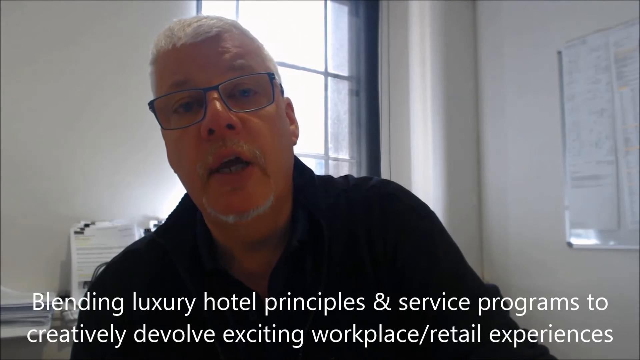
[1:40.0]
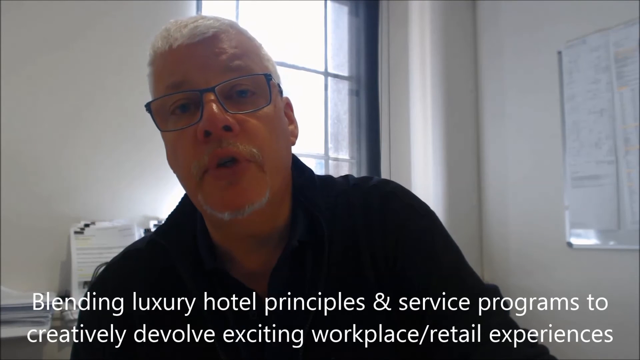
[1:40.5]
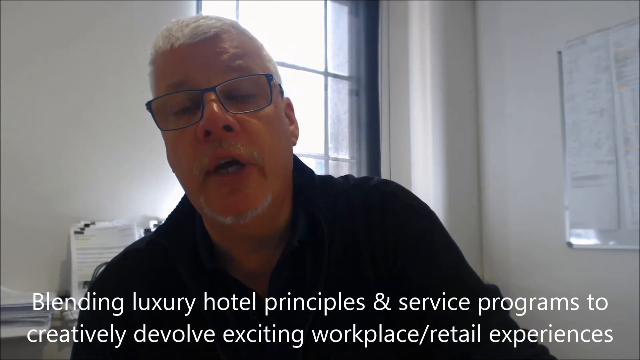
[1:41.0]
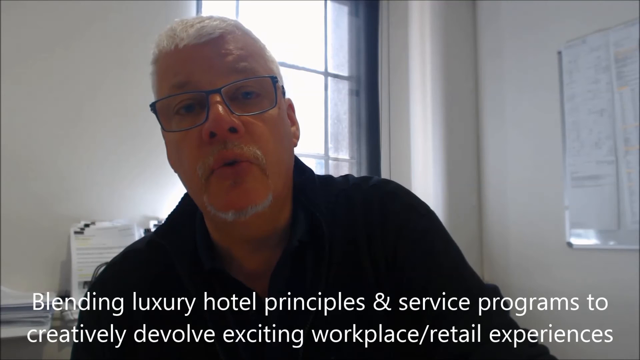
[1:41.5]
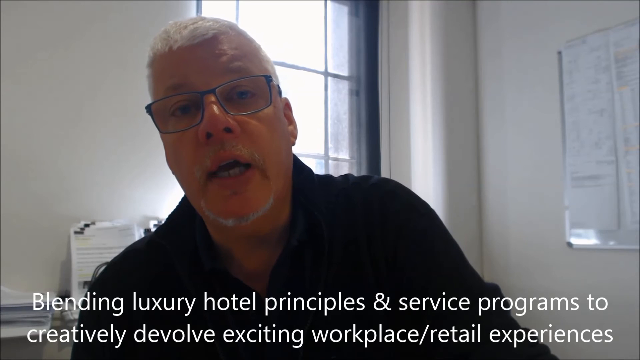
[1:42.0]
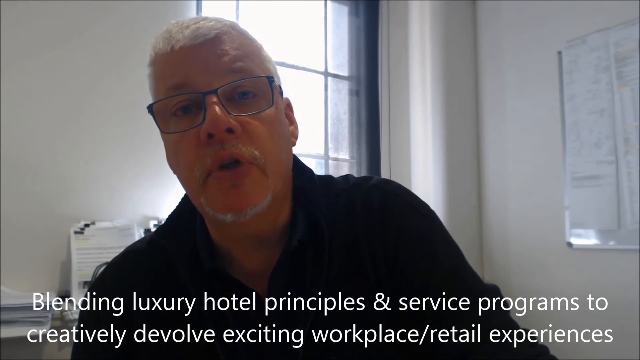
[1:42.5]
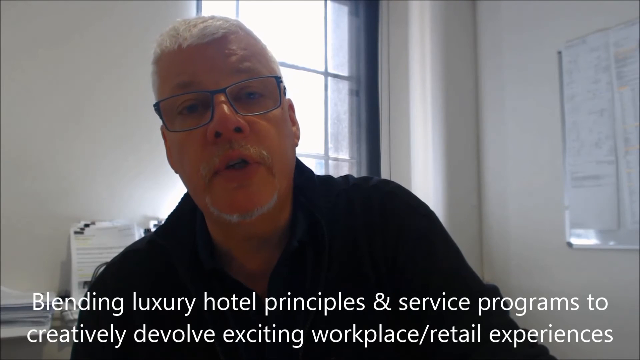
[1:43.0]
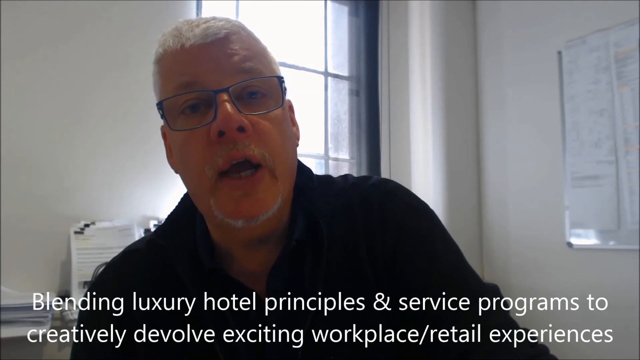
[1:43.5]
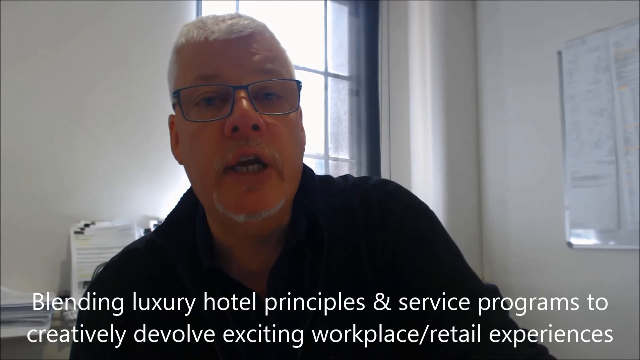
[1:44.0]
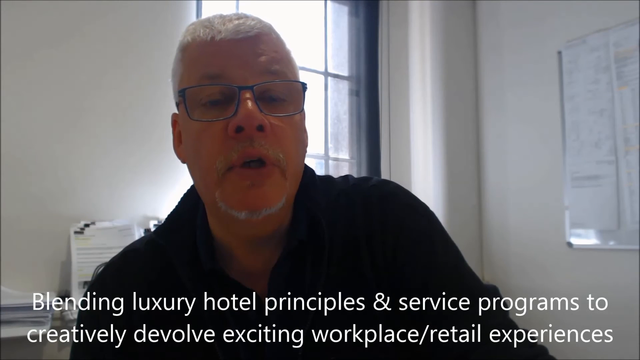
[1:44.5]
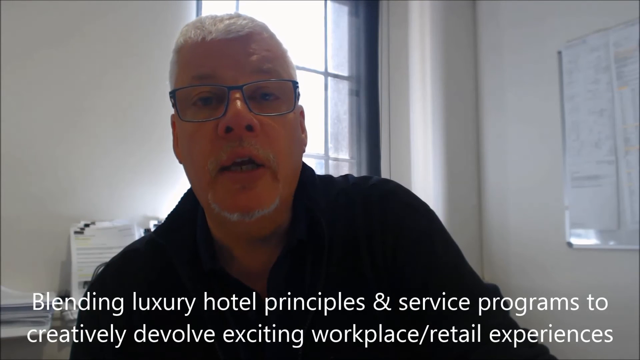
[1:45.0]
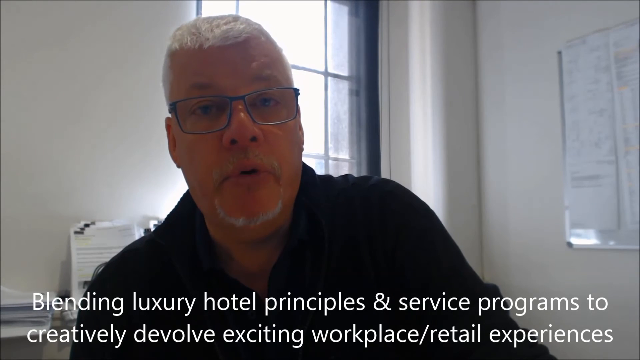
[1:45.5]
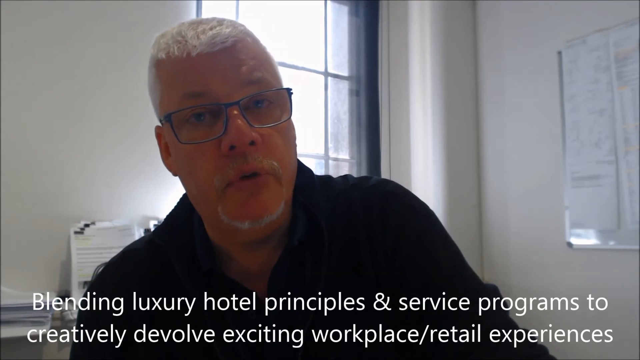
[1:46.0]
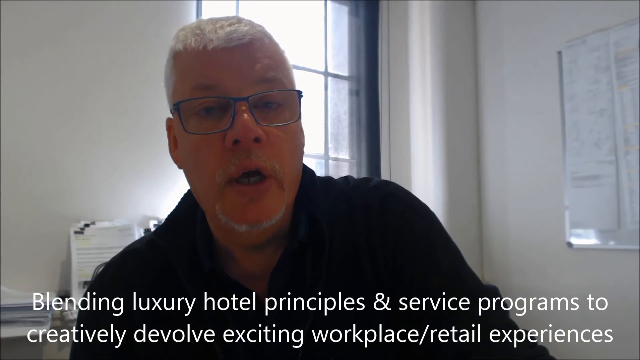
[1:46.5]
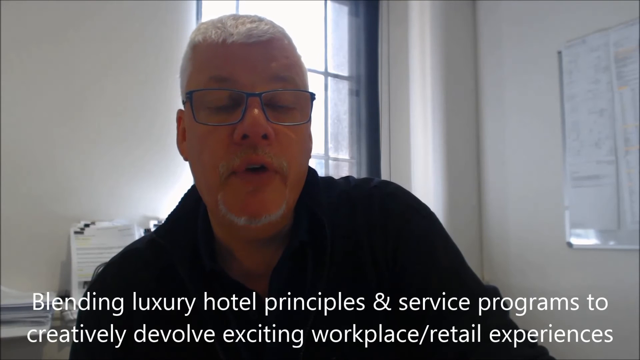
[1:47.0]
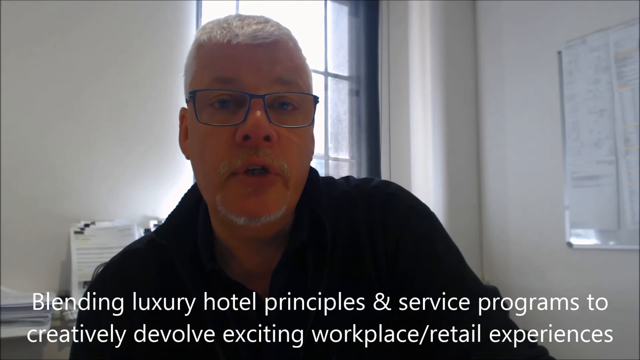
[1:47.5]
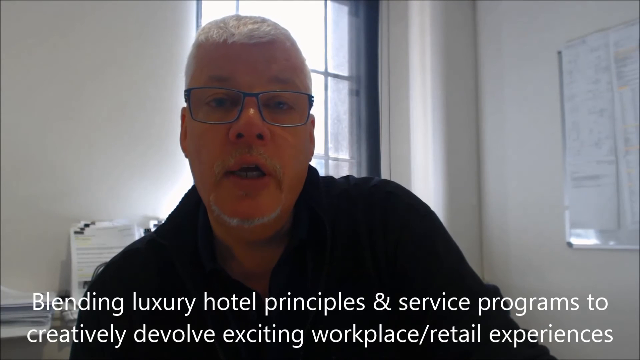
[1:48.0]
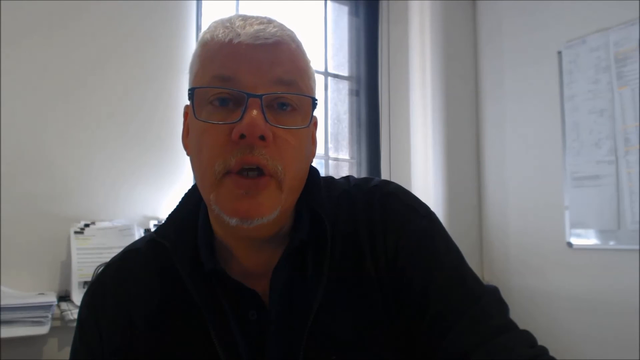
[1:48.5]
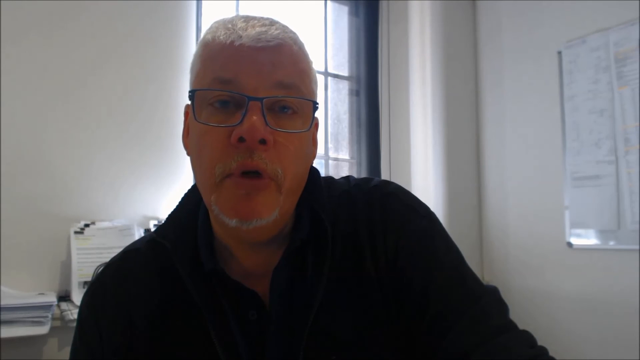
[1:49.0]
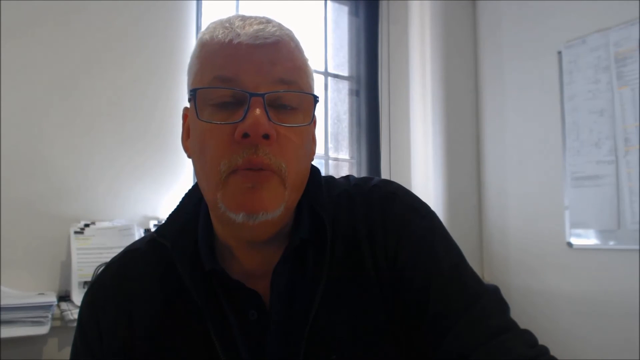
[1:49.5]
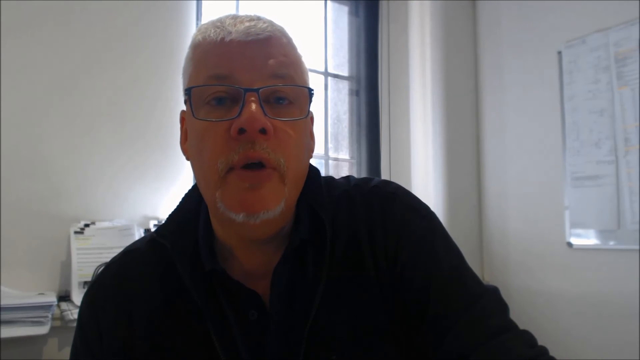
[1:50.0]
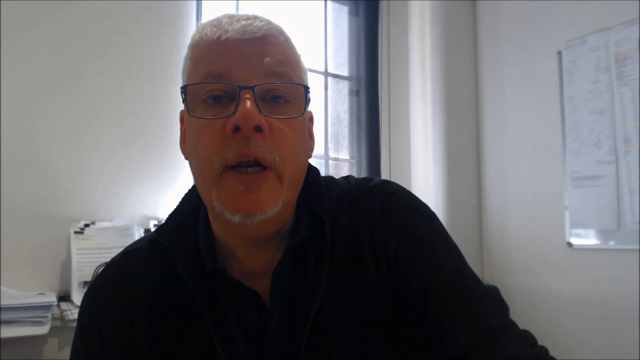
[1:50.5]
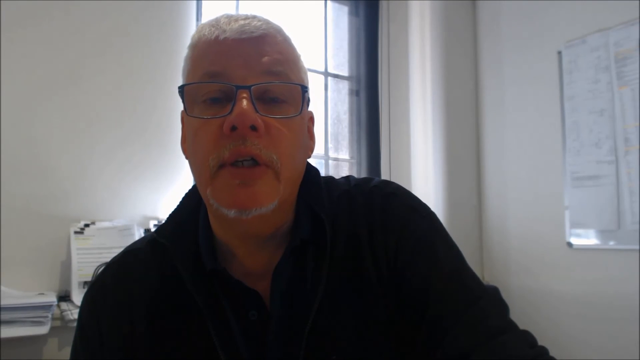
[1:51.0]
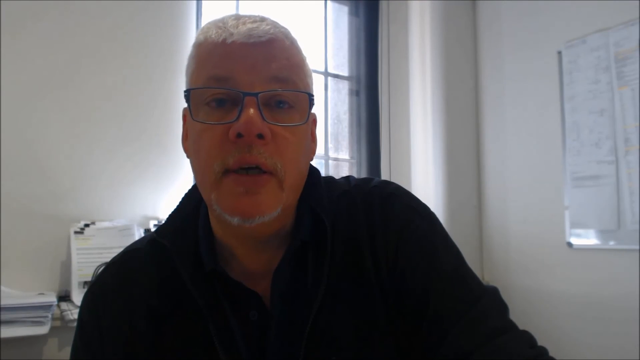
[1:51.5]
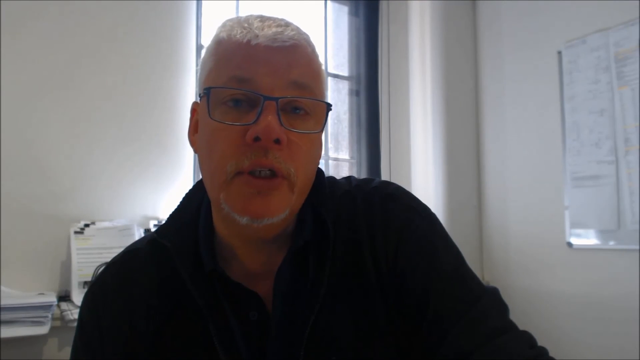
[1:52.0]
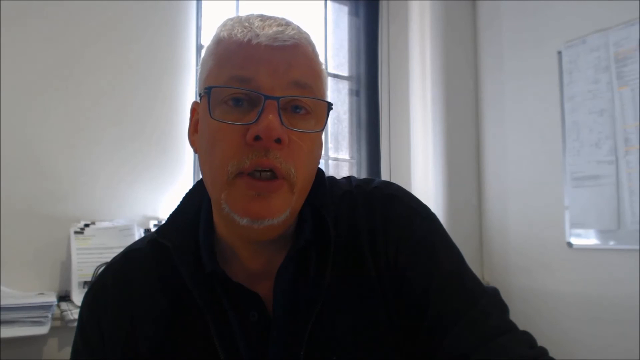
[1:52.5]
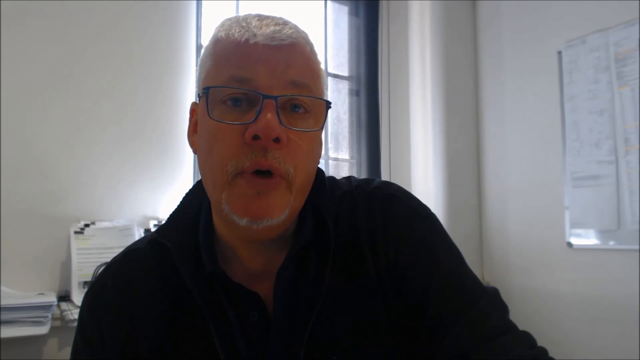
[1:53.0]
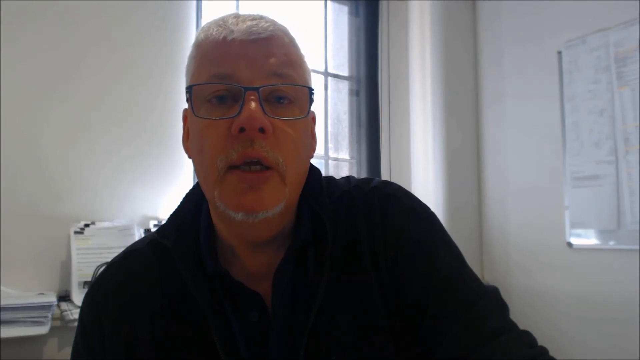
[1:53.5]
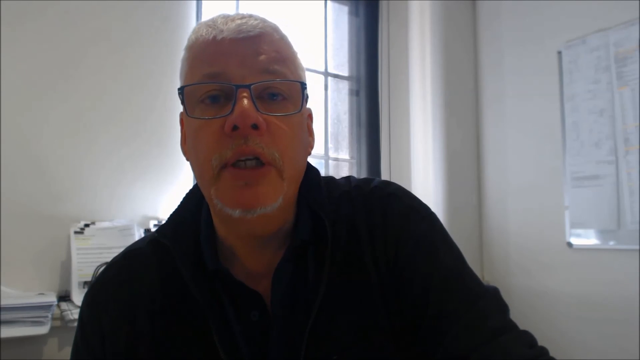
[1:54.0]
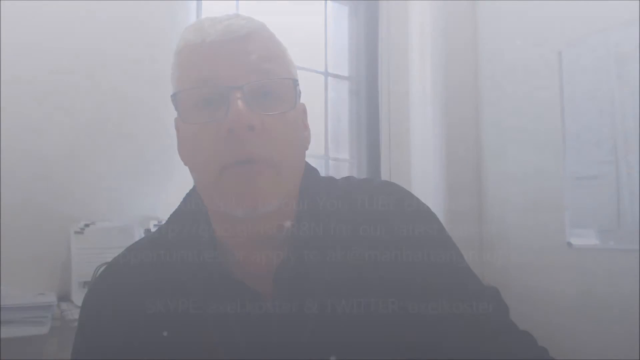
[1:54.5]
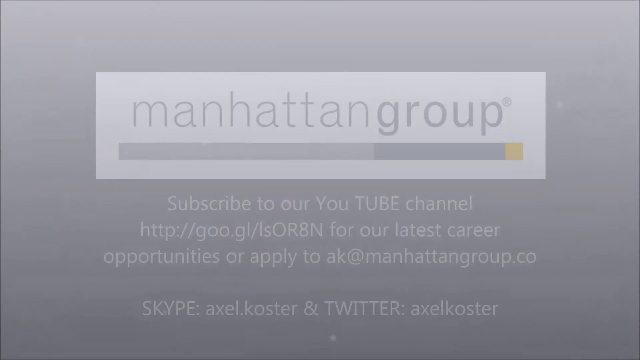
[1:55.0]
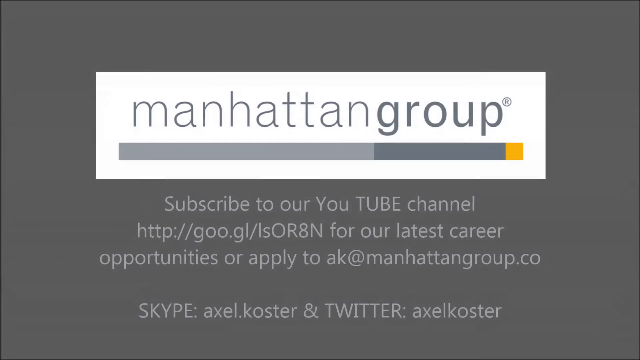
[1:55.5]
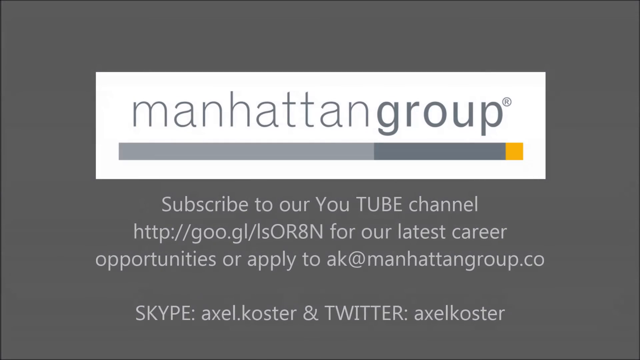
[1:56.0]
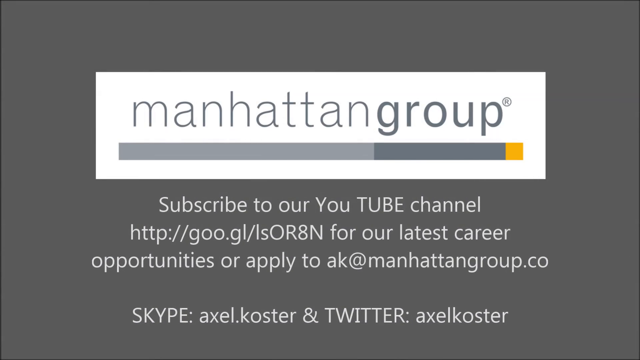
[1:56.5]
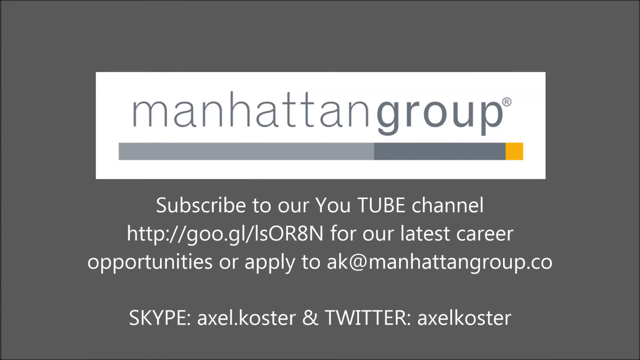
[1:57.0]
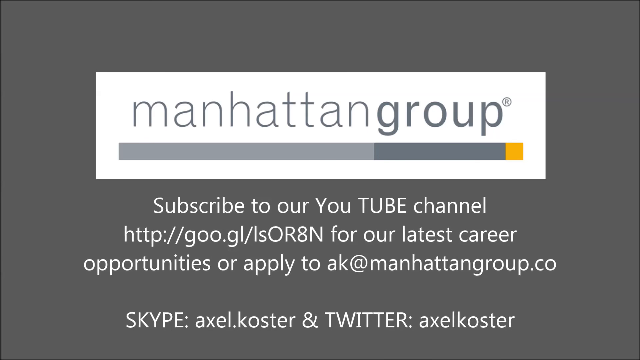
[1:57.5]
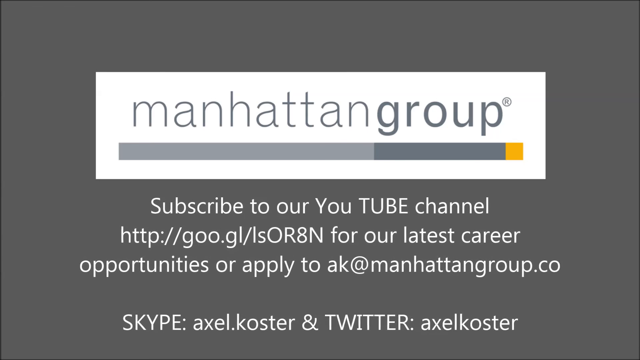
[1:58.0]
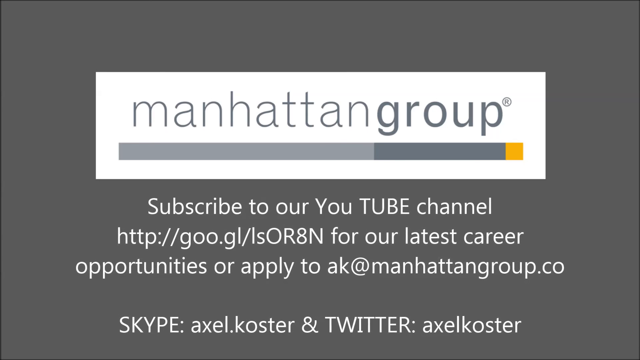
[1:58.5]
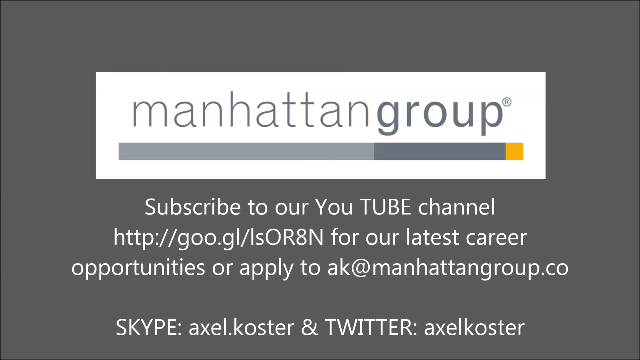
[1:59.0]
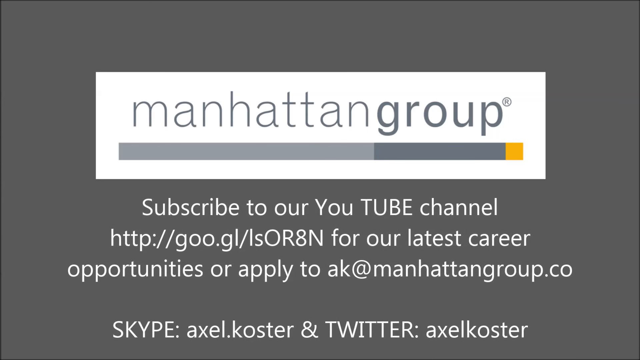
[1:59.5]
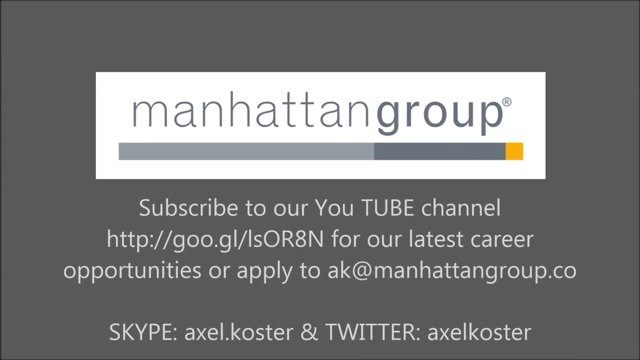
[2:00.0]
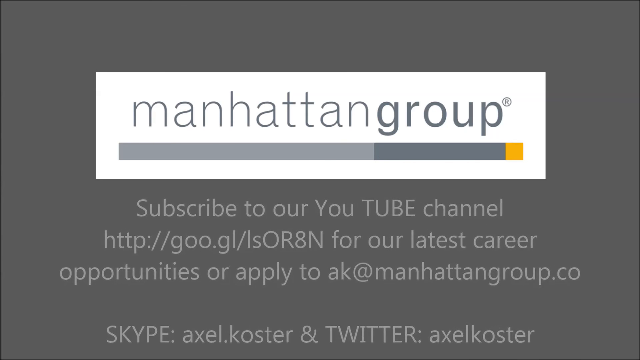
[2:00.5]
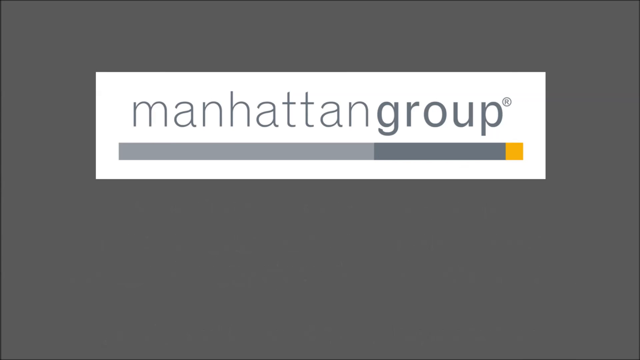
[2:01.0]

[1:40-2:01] The man talks again, apparently giving a summary. The background is the same: apparently an office with a whiteboard, a window and some papers. He is a white man with gray hair and glasses. White text appears at the bottom of the screen, mentioning something about delivering deluxe hotel experiences. The video then goes to a closing screen identifying the Manhattan Group and giving its contact information and social media information. The YouTube listing on this last slide spells YouTube as two separate words, with the "U" capitalized and "tube" not capitalized.